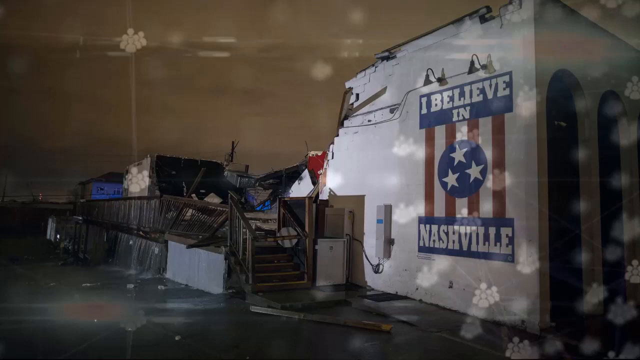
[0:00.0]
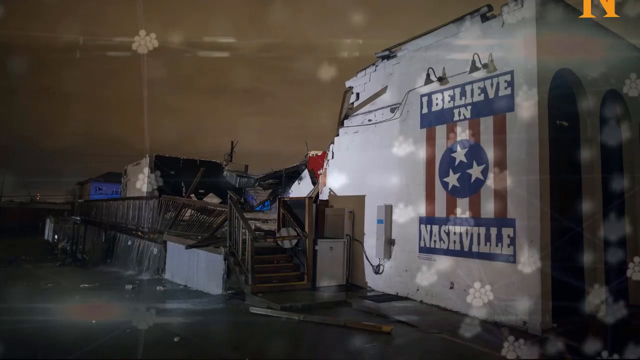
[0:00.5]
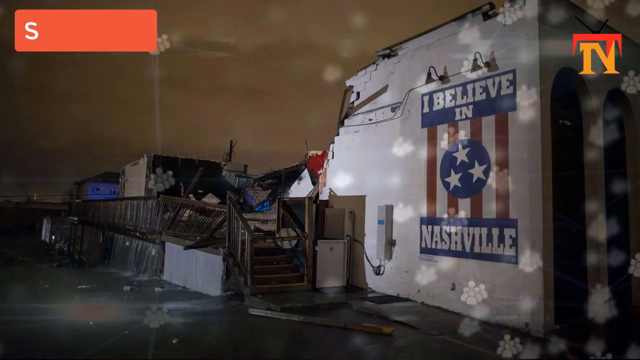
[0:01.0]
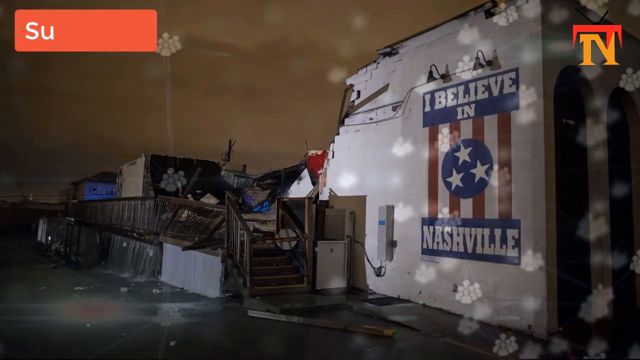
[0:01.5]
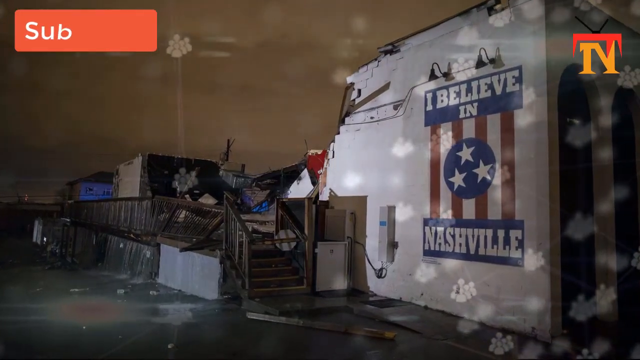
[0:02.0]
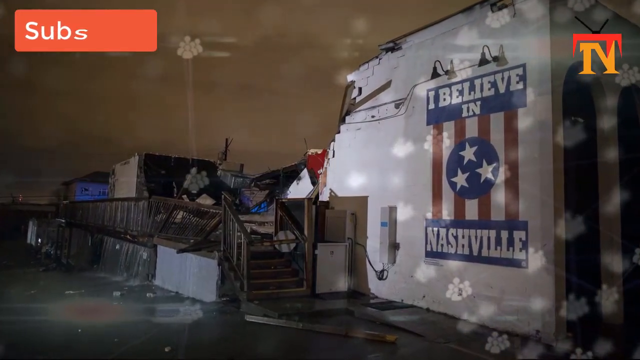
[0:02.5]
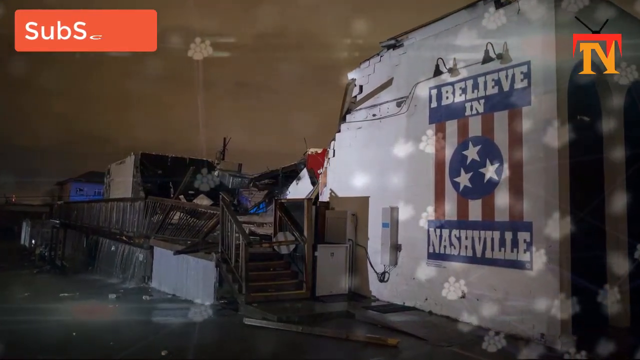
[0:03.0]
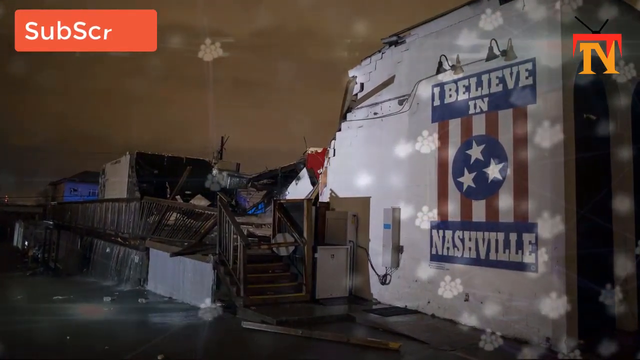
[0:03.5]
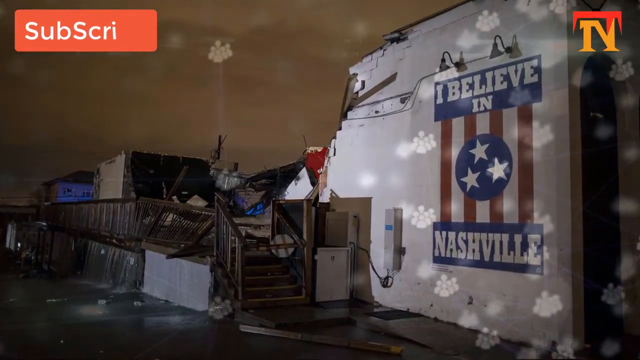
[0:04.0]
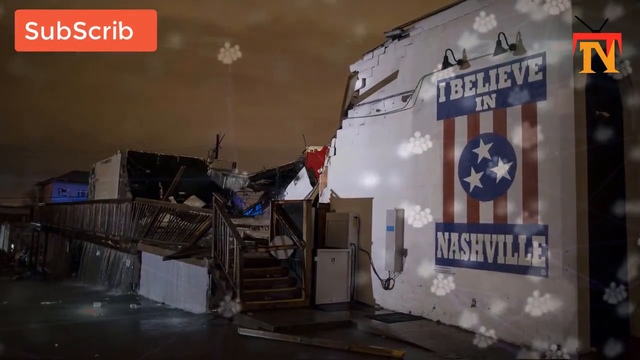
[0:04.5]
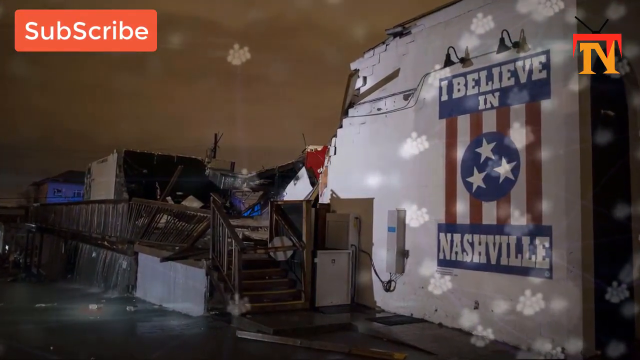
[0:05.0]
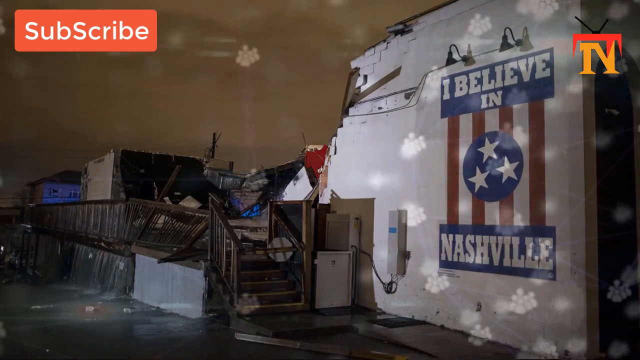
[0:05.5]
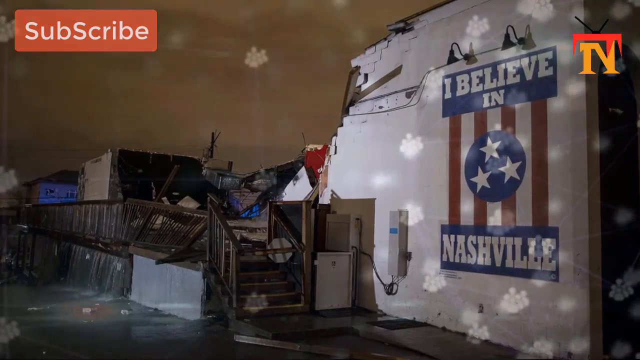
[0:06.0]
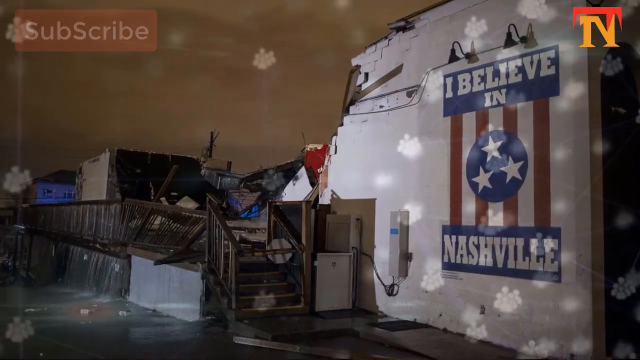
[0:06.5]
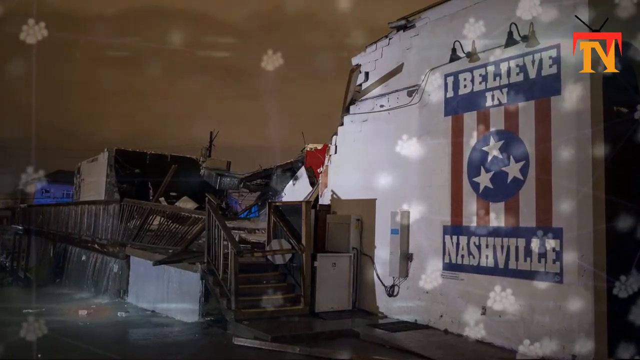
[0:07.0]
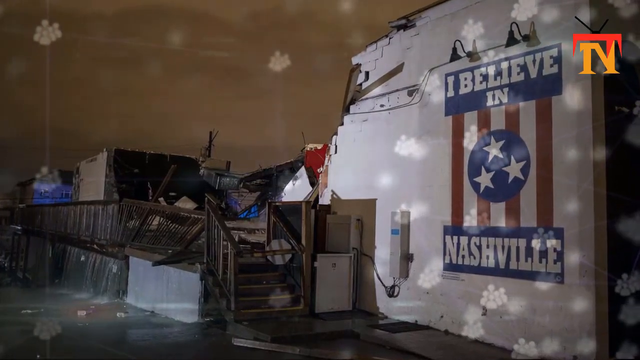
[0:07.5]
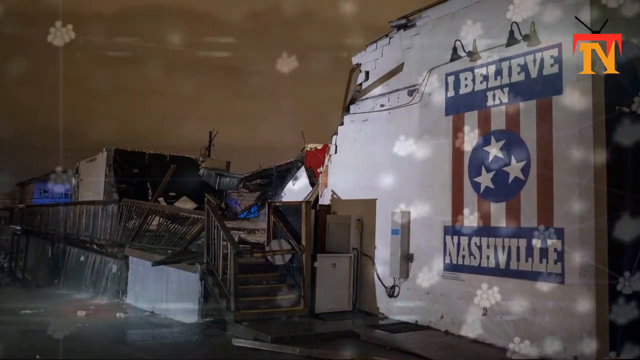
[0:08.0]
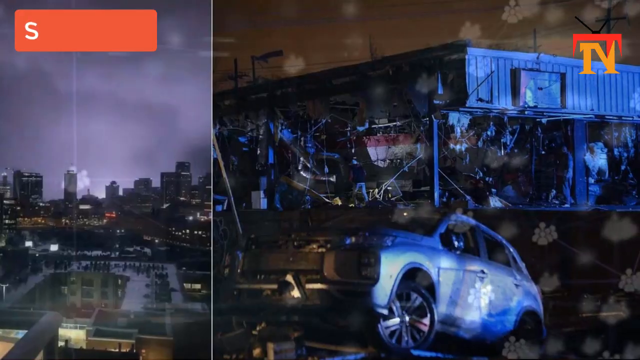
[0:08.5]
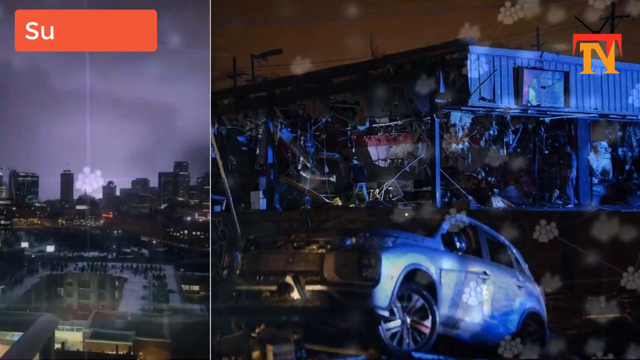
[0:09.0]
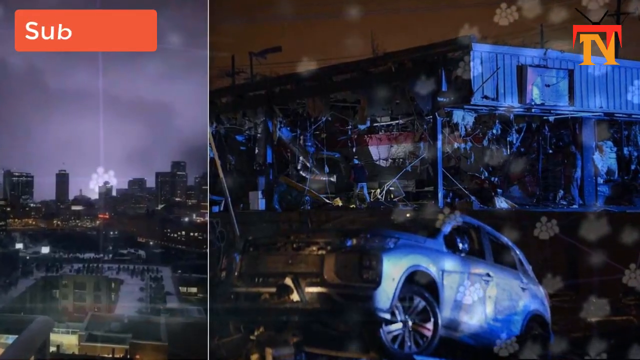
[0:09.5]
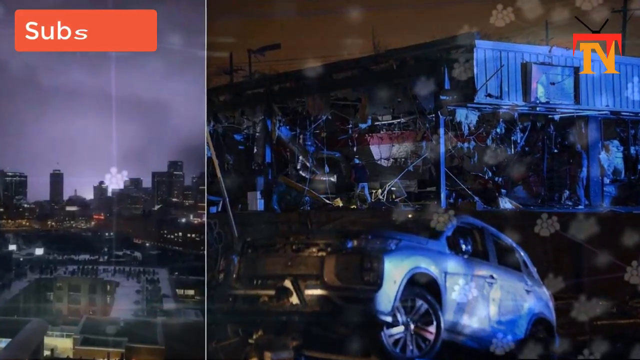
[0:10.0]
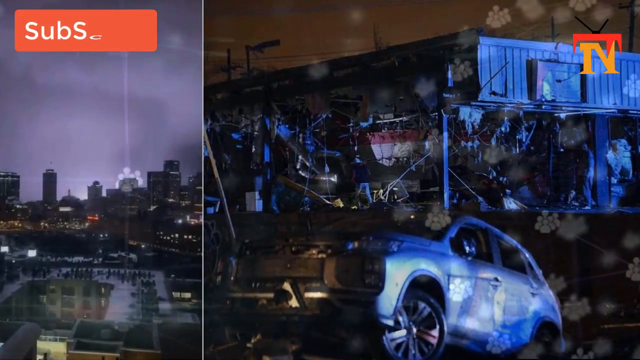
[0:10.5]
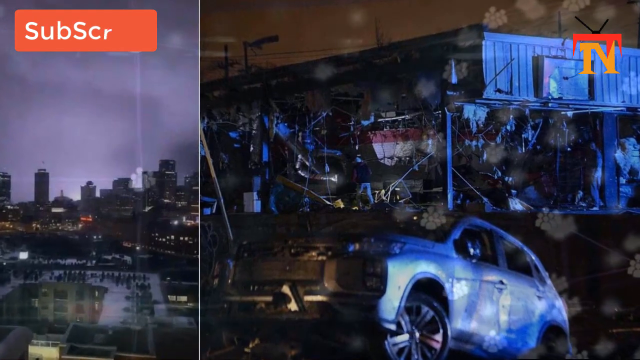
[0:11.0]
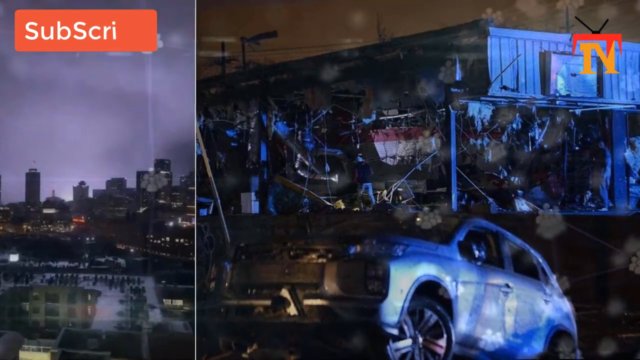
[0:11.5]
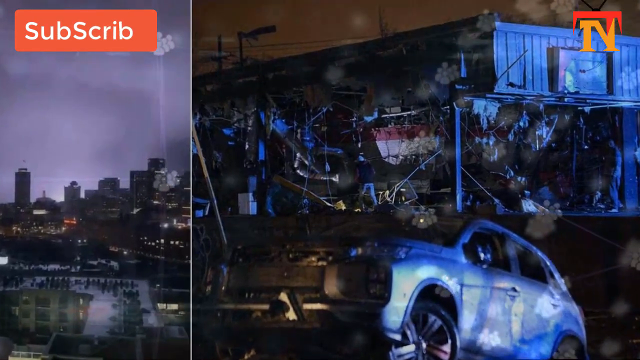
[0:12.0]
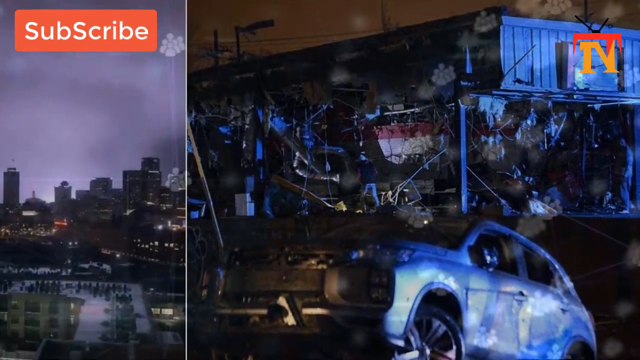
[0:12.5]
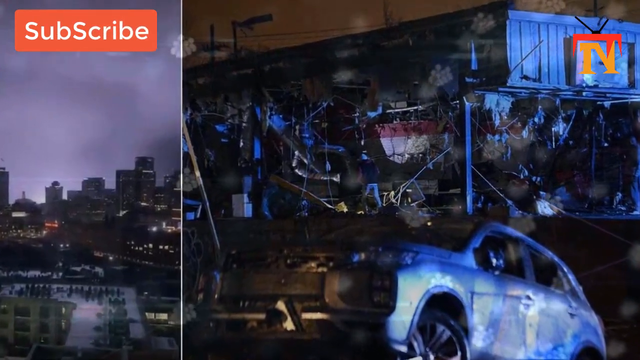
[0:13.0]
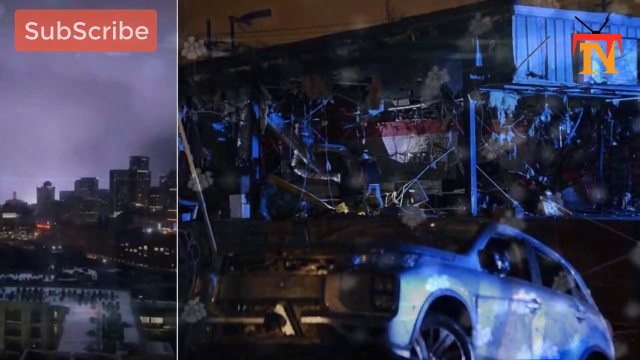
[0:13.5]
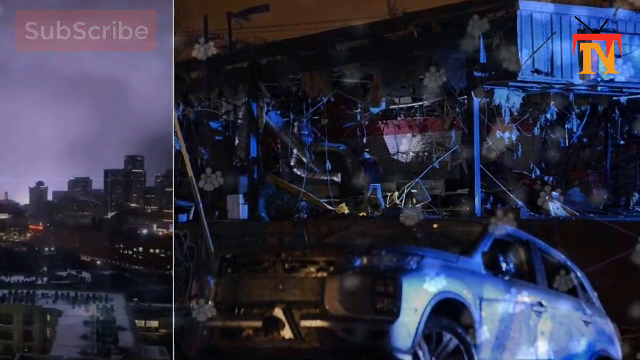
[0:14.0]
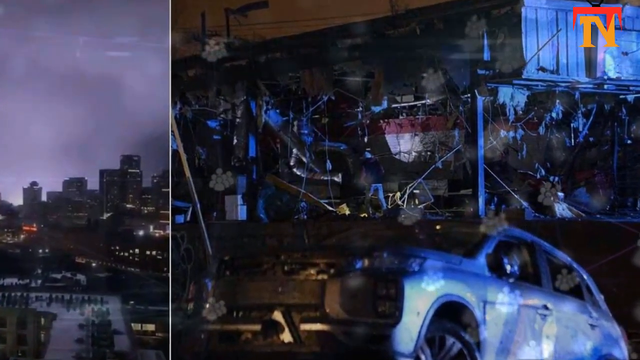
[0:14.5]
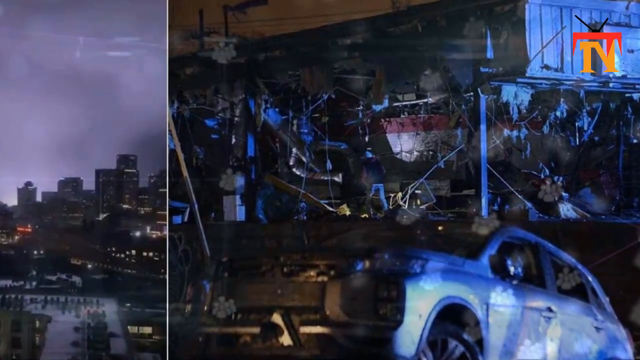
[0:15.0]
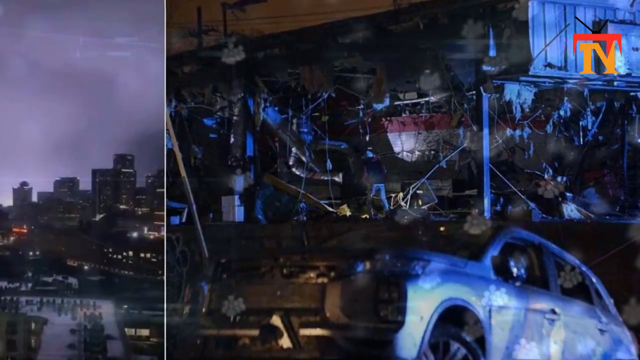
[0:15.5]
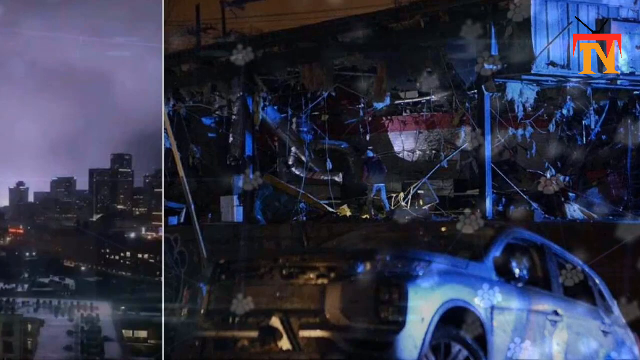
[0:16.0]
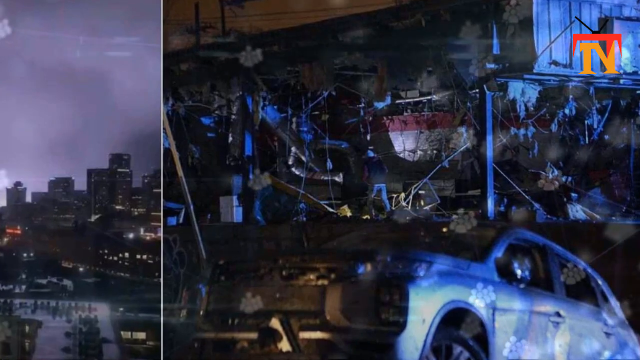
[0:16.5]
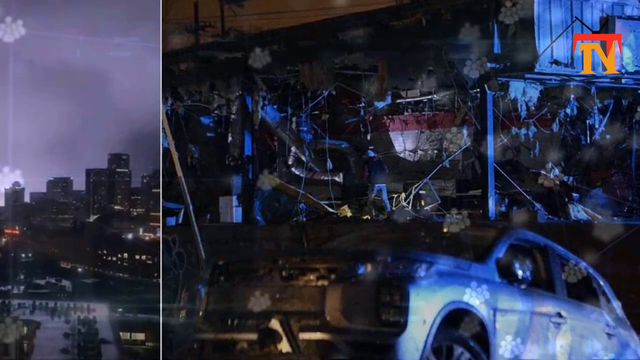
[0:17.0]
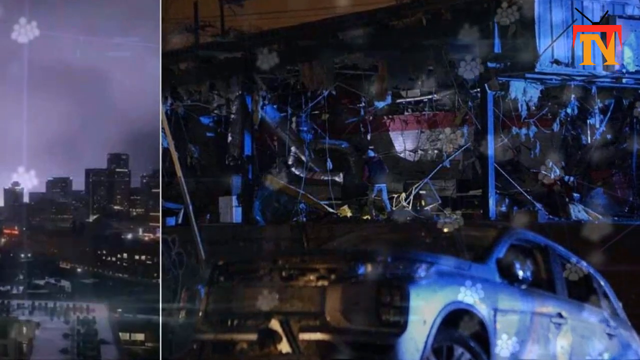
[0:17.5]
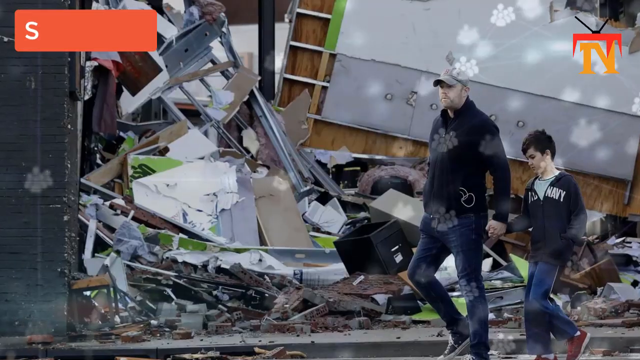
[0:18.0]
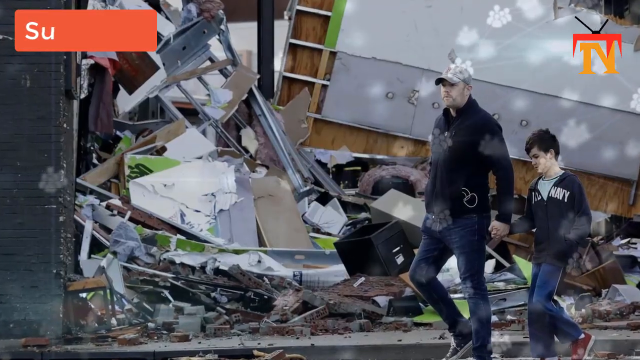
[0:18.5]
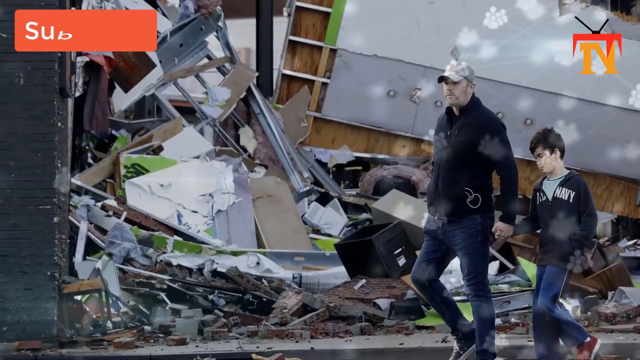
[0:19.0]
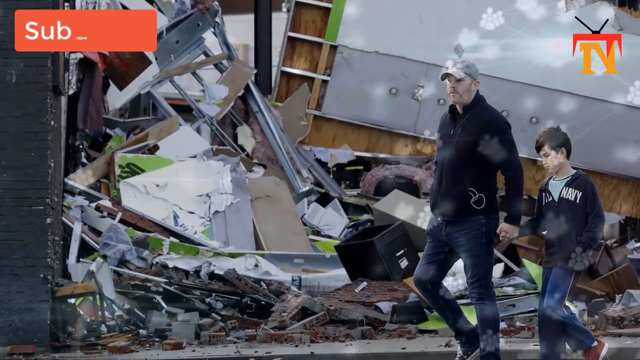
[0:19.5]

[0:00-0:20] The video opens on the exterior of a white building with an upside-down flag that reads "I believe in" at the top and "Nashville" at the bottom, with red and white stripes in the center. A logo bounces up and down in the top right corner. The scenery then changes to two images split side by side as video clips: the left shows a stormy city landscape off in the distance, and the right shows a crashed car in front of what appears to be an old building, with many destroyed items out front. Tiny white bubbles float around the screen as it changes from scene to scene. The next scene is an image of an older man wearing a hat, holding the hand of a young boy in a navy blue sweatshirt in front of some wreckage.